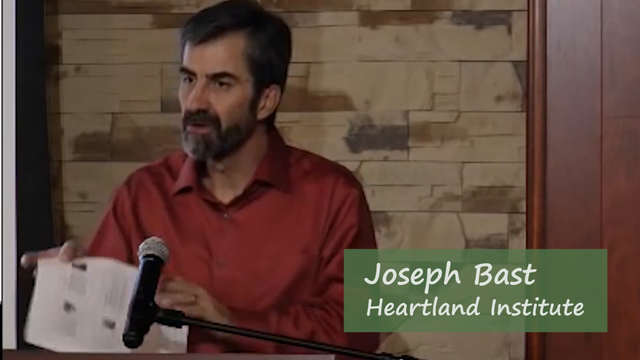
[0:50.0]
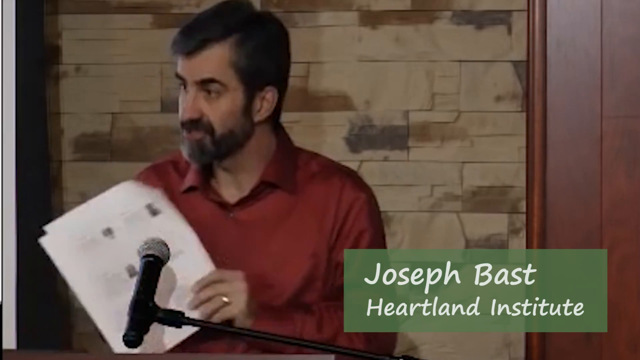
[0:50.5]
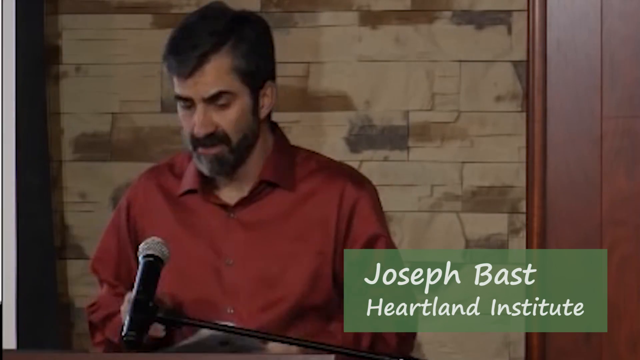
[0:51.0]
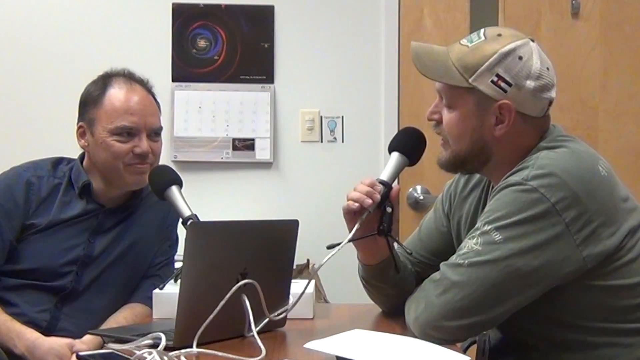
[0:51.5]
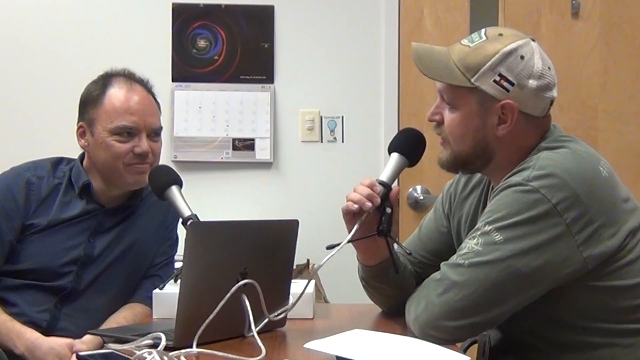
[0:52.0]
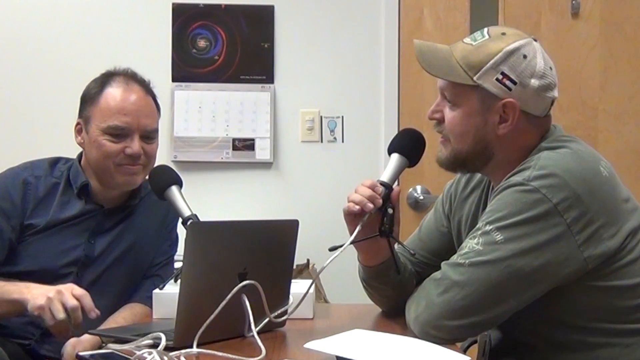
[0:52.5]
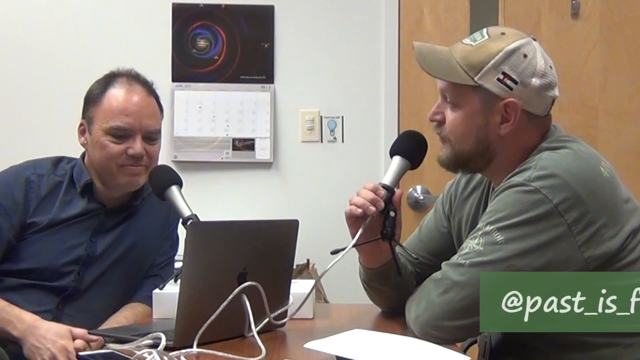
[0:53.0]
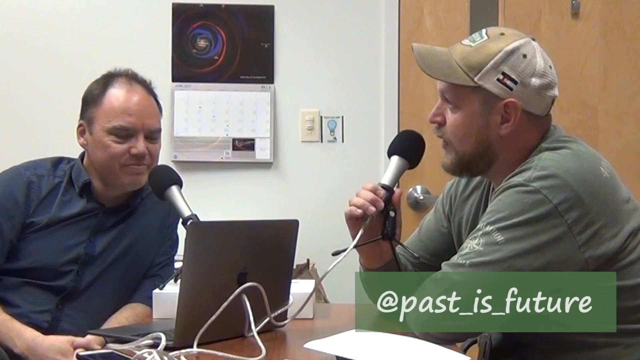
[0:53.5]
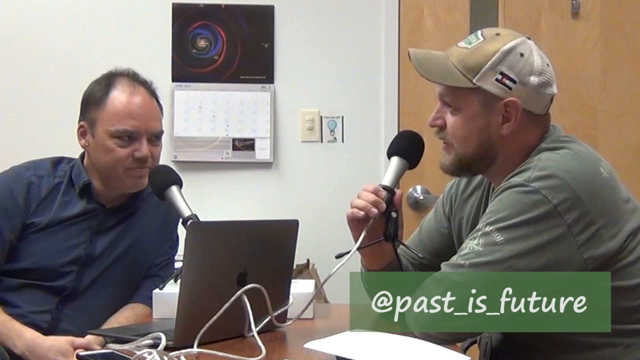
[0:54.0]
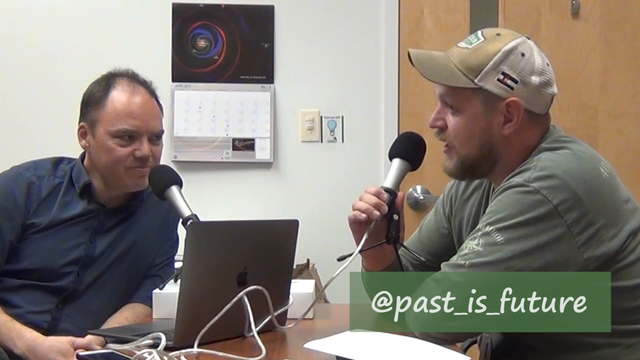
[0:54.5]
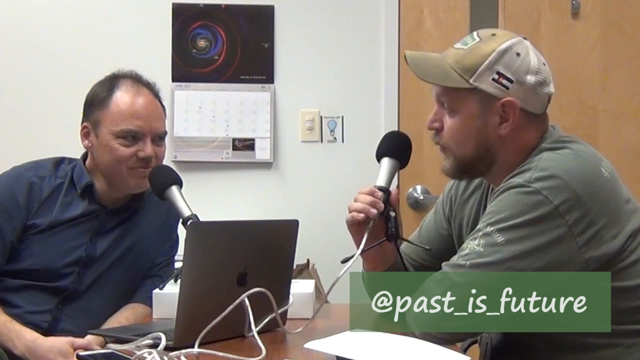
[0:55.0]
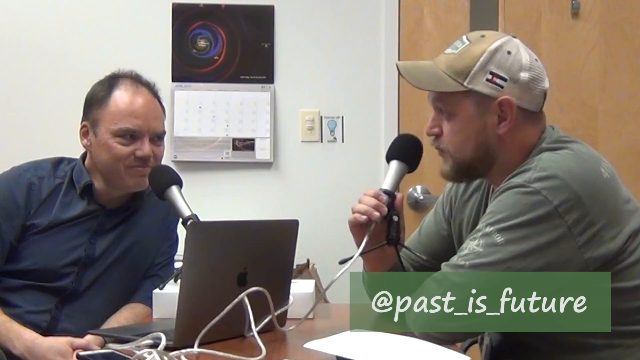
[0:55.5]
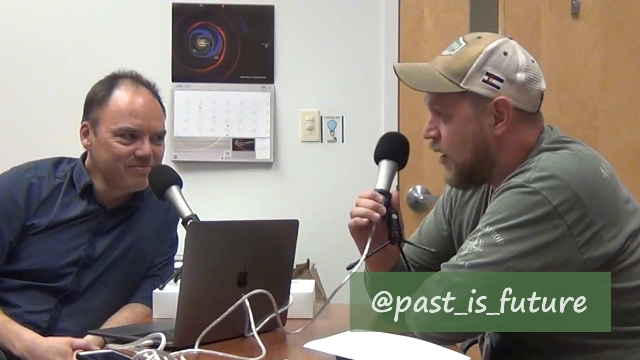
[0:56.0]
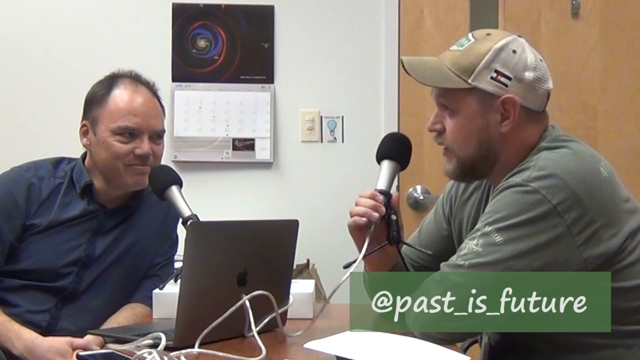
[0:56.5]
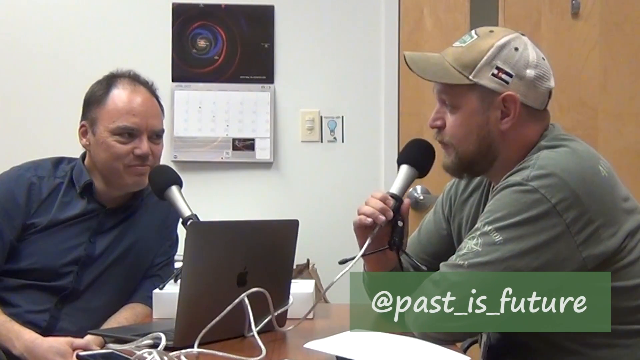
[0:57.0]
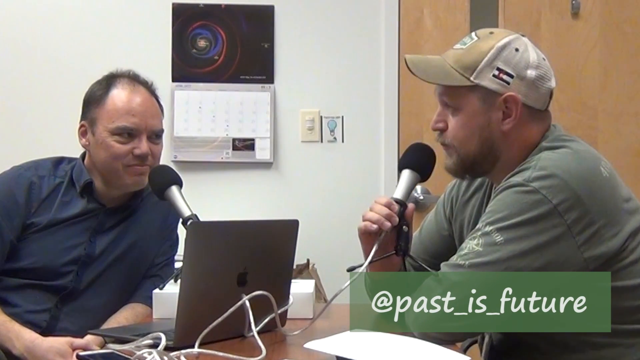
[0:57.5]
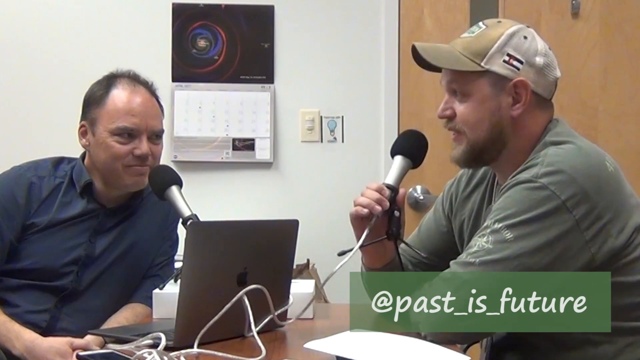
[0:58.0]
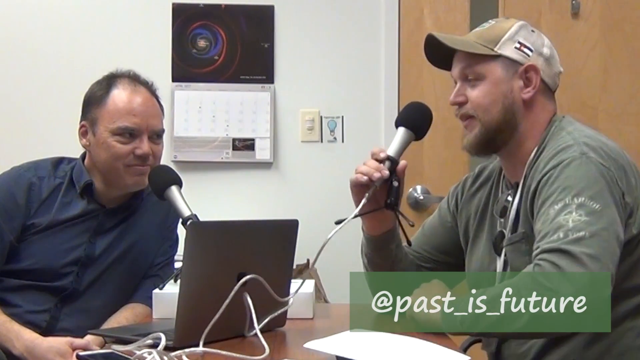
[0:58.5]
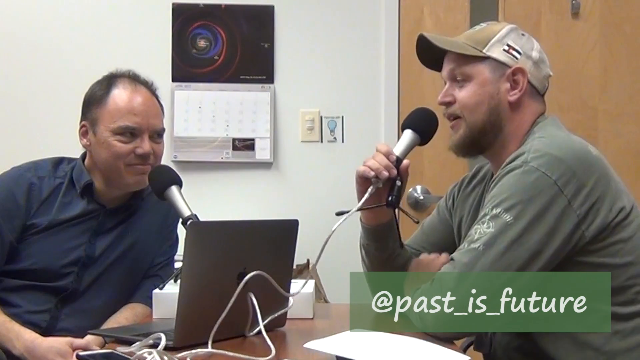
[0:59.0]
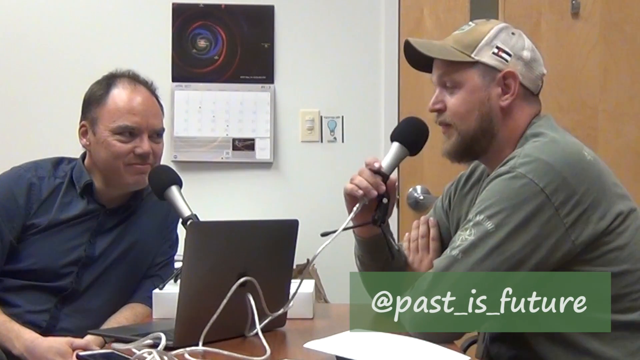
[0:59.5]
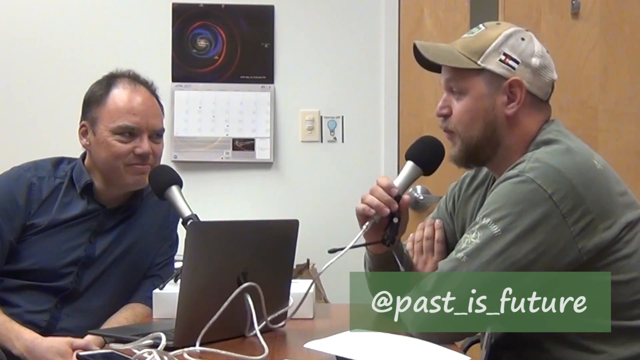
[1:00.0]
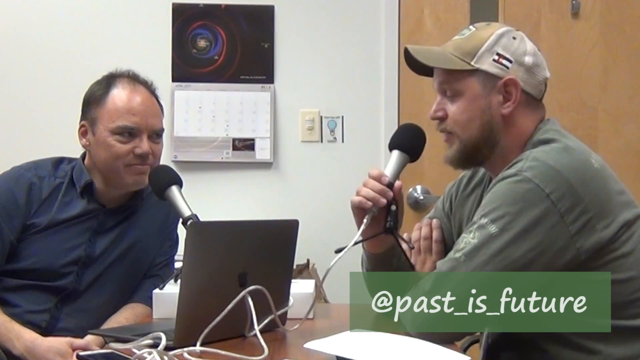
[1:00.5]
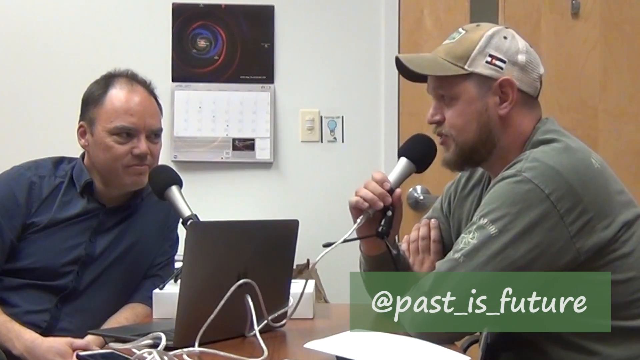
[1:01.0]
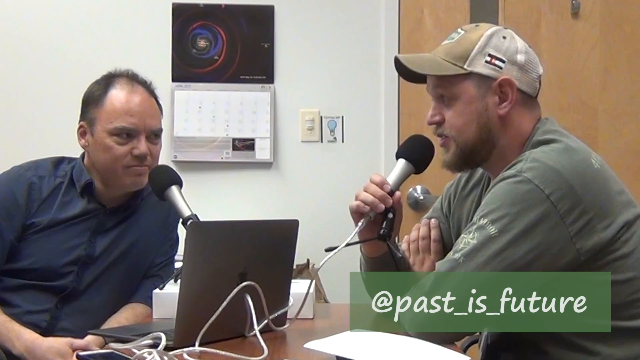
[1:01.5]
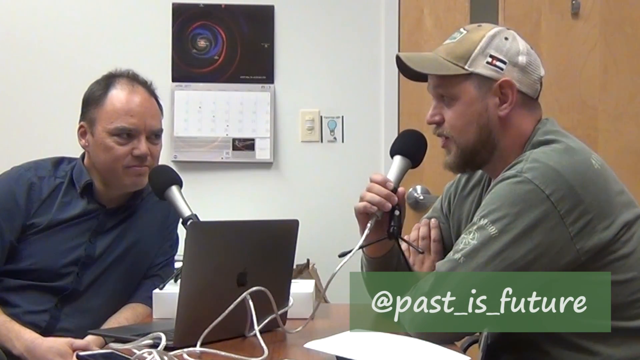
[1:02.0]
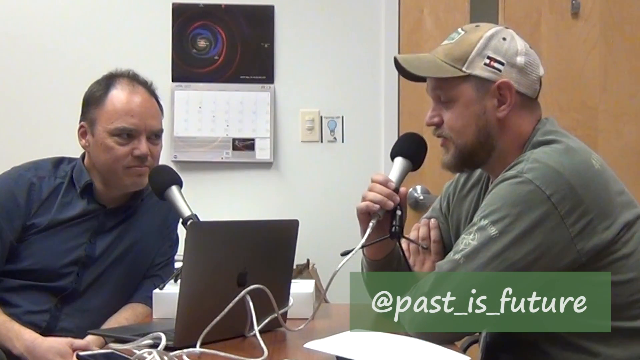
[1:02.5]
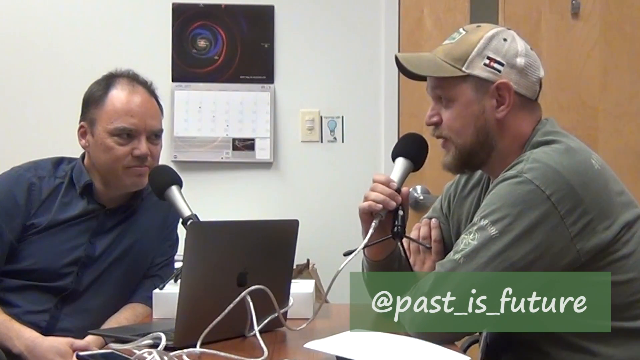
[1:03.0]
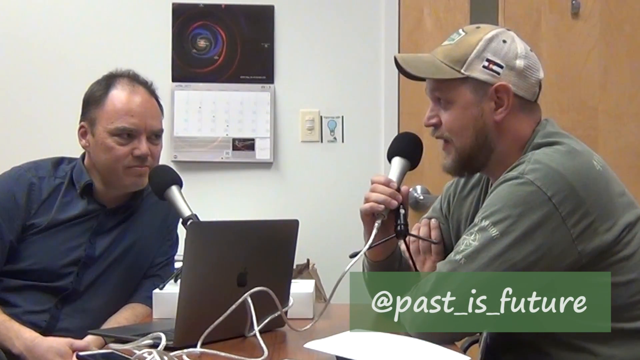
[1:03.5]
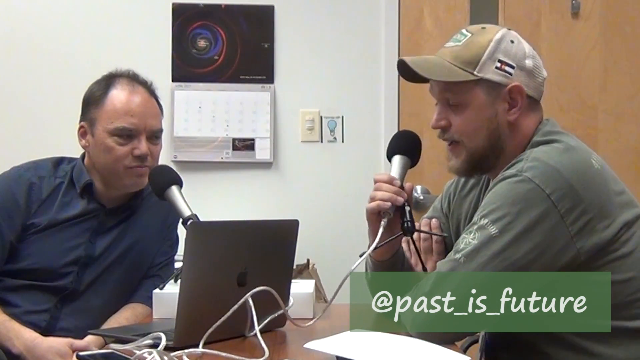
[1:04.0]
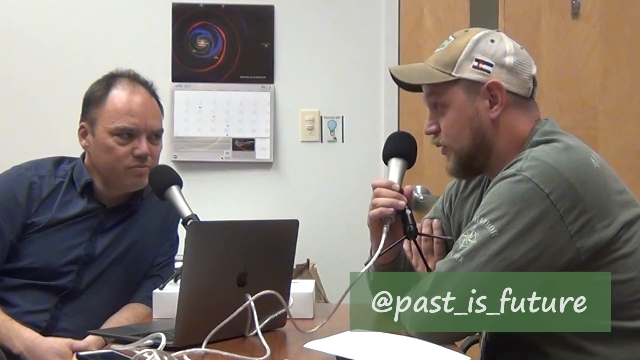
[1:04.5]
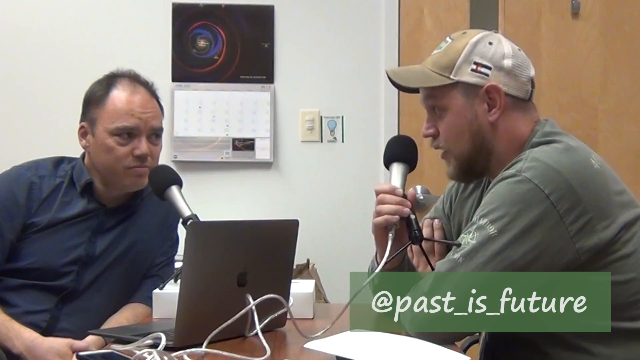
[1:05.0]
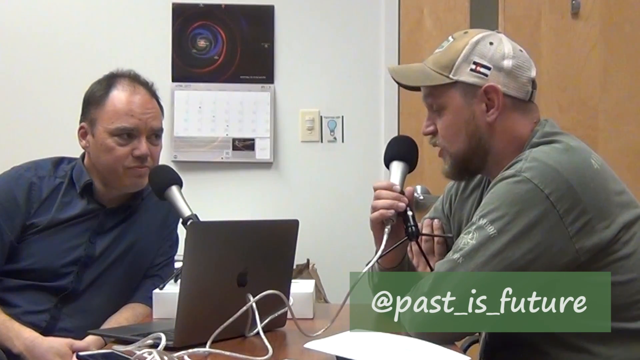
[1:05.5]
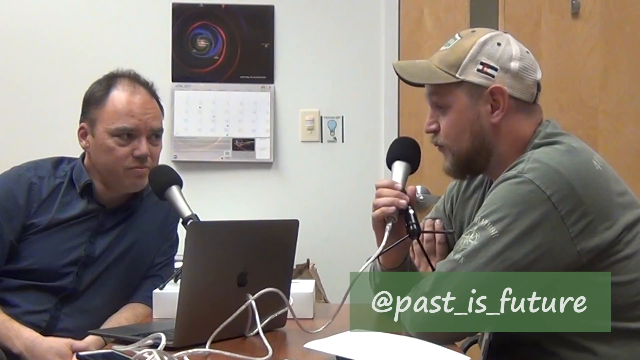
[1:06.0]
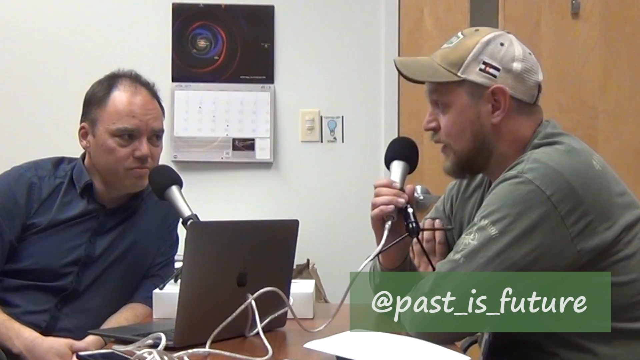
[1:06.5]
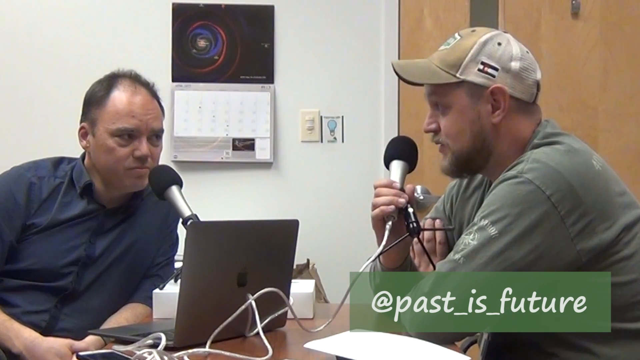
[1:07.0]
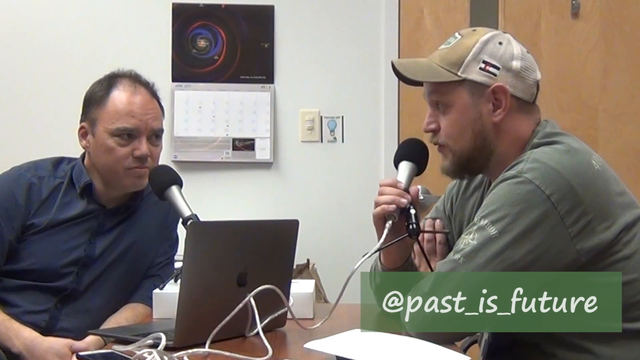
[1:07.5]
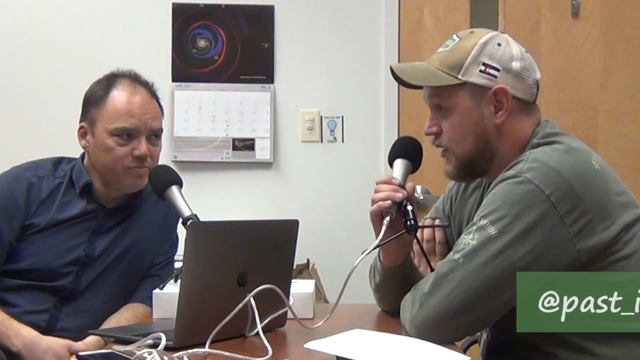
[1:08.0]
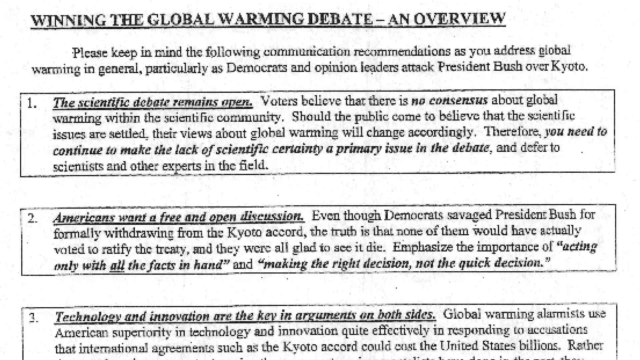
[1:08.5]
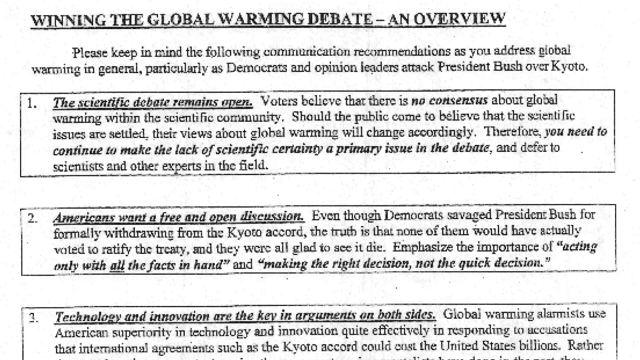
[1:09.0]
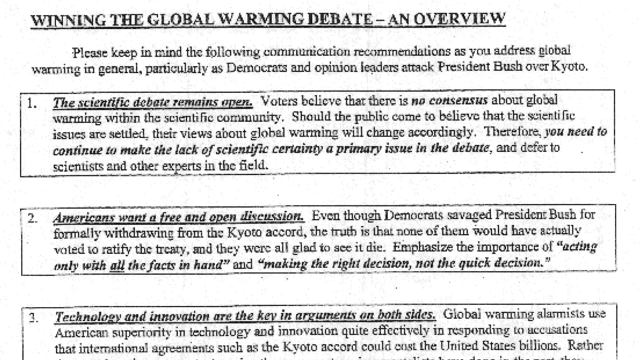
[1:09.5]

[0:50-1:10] From a video series called E2, Why Denialists Attack the Scientific Consensus, a man in his mid to late 40s with dark hair, dark eyes, a mustache, a beard, and a red button-down shirt has a microphone in front of him and holds a piece of paper. Bricks are in the background, with wood in the lower right-hand corner. White letters on a green background give his name, "Joseph Bast", from the "Heartland Institute". The scene returns to the two people with microphones facing each other in a room, speaking to one another, presumably about why people deny the scientific evidence and consensus.